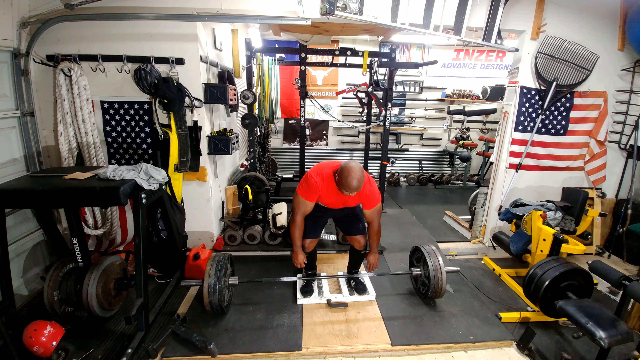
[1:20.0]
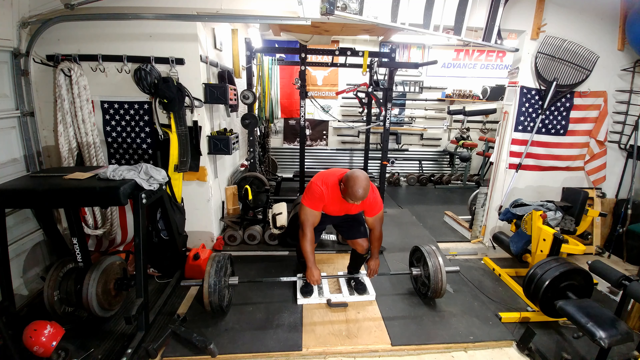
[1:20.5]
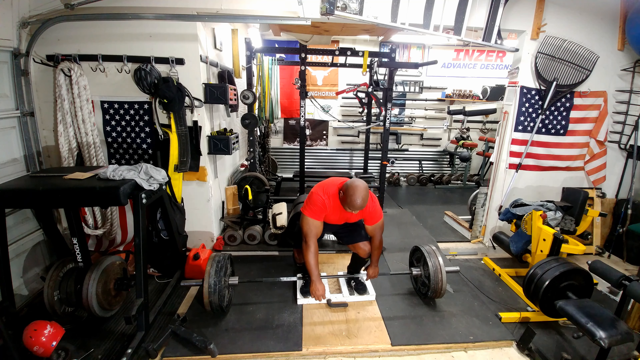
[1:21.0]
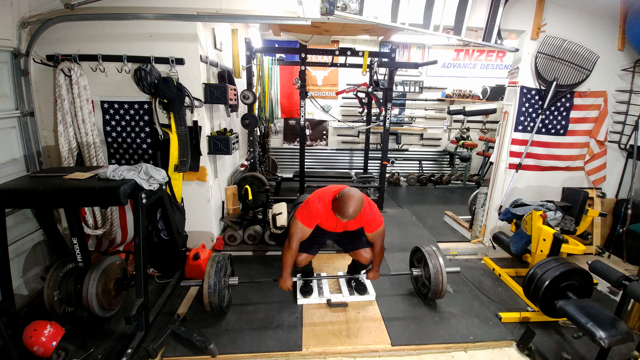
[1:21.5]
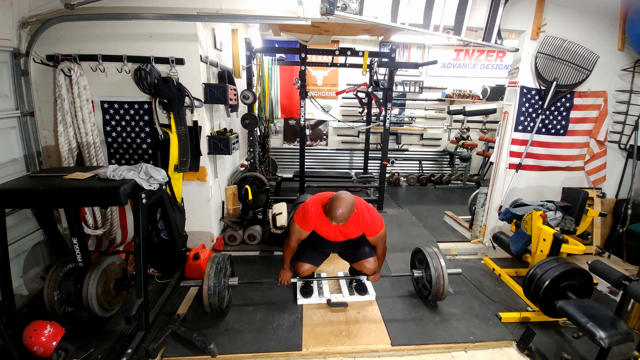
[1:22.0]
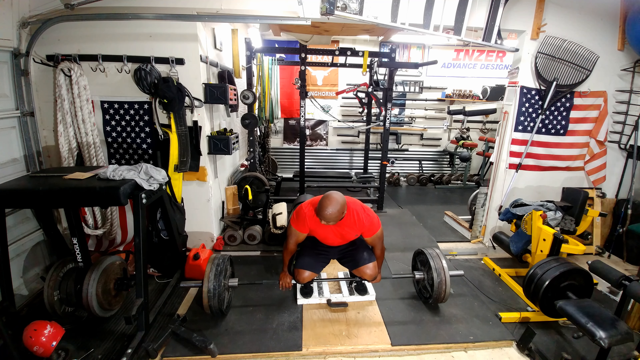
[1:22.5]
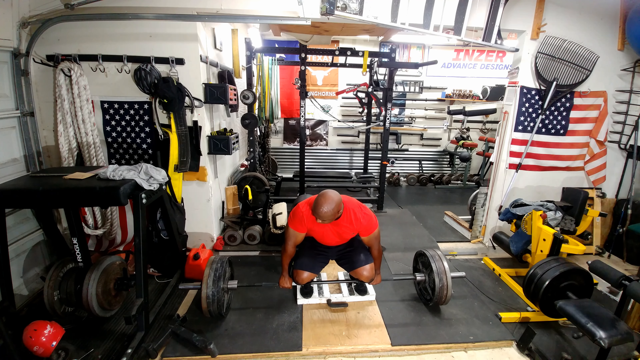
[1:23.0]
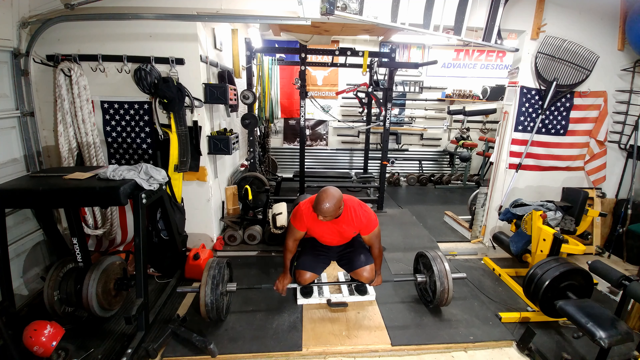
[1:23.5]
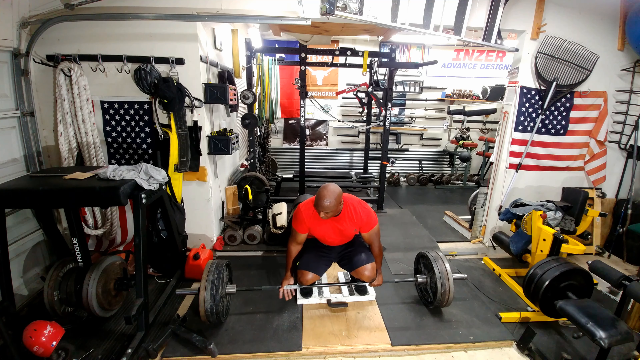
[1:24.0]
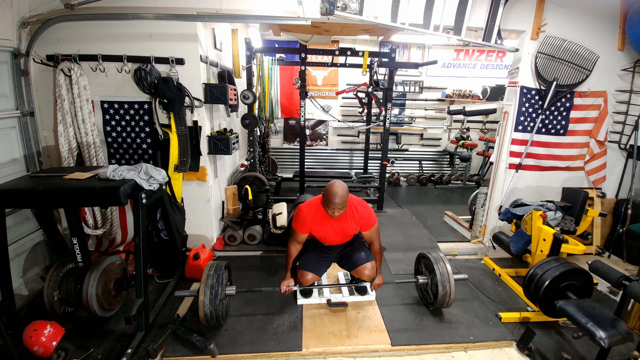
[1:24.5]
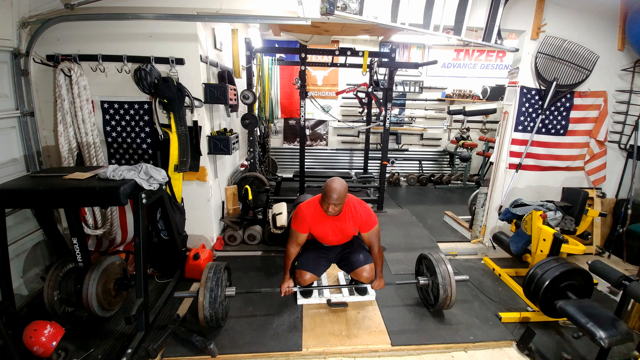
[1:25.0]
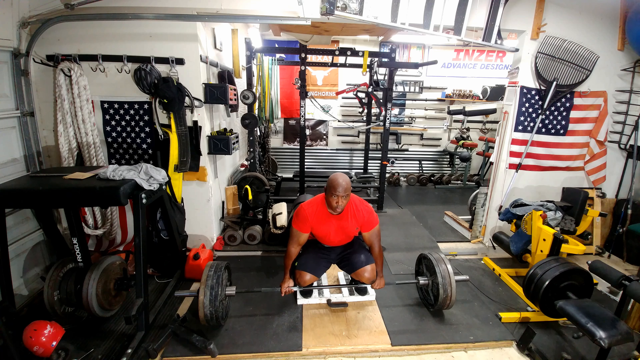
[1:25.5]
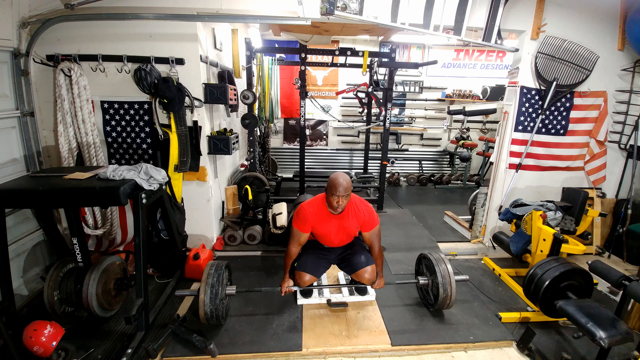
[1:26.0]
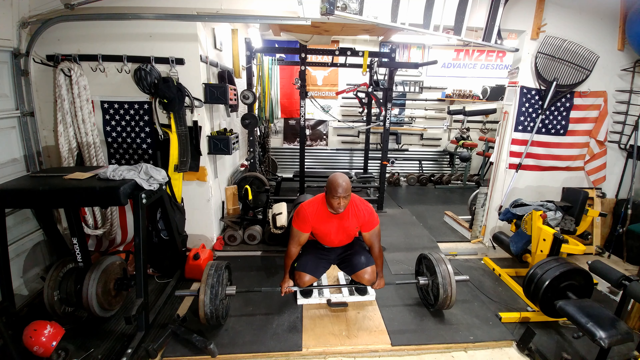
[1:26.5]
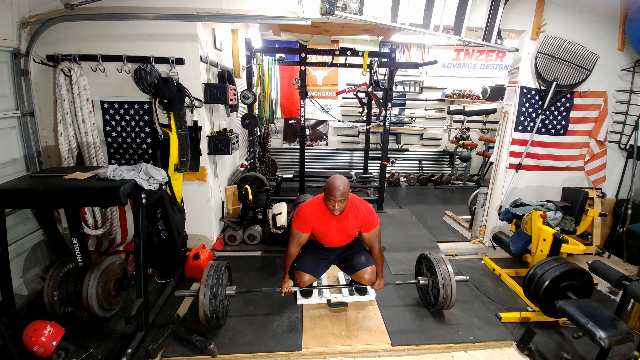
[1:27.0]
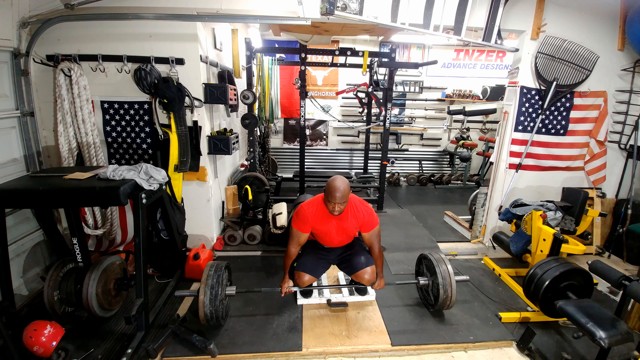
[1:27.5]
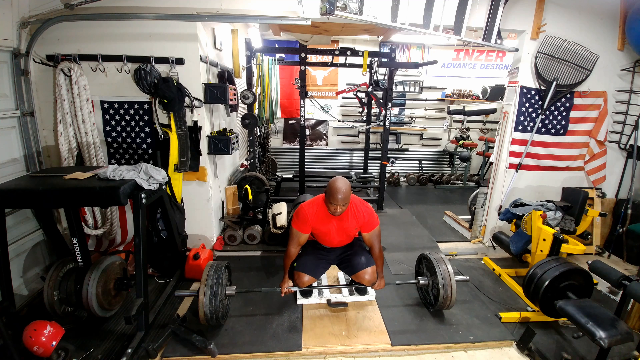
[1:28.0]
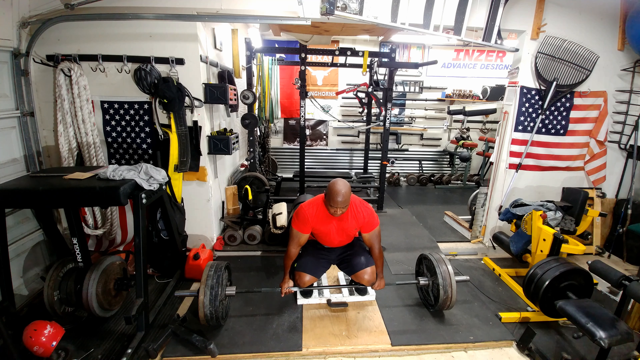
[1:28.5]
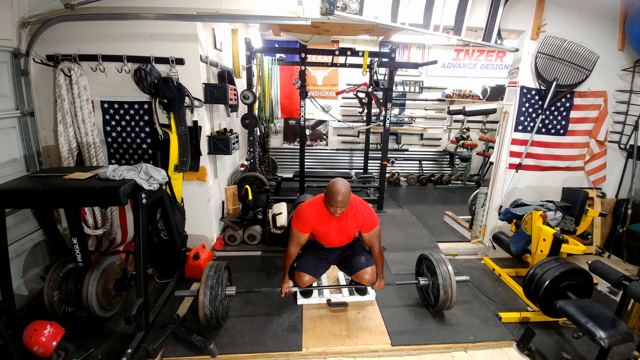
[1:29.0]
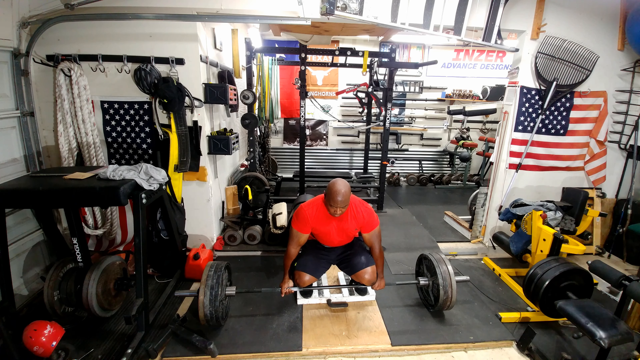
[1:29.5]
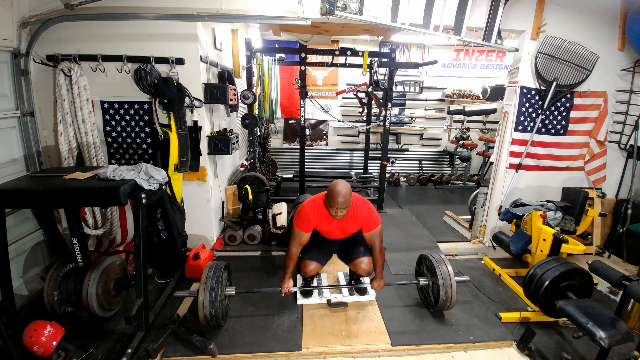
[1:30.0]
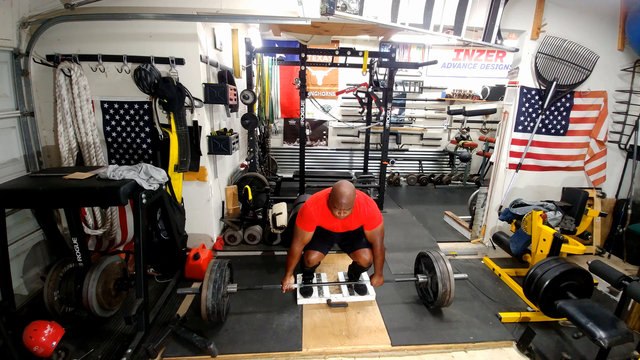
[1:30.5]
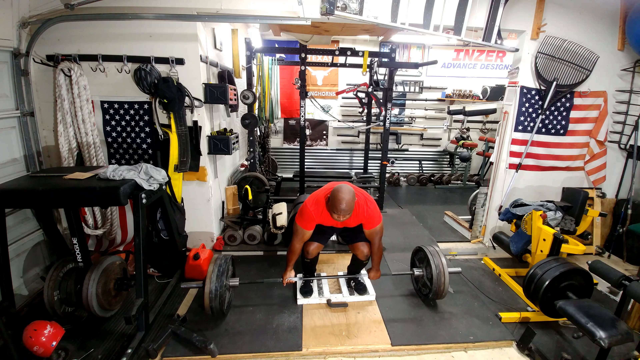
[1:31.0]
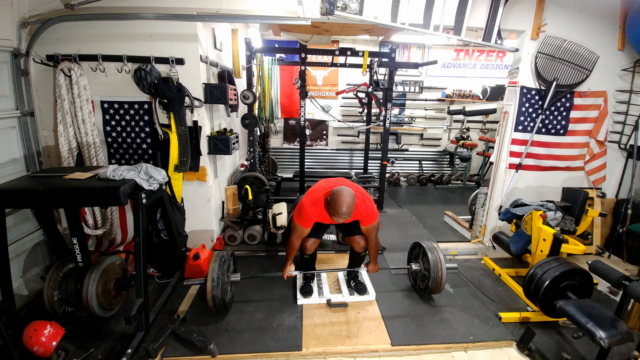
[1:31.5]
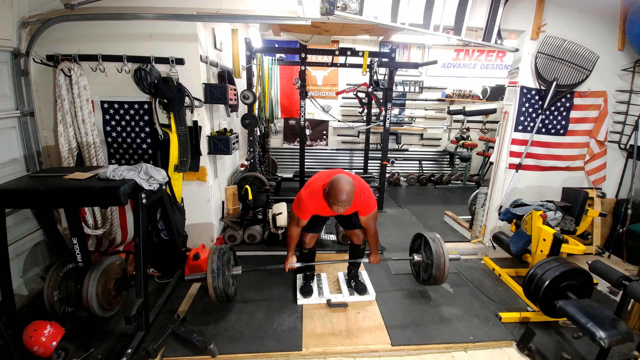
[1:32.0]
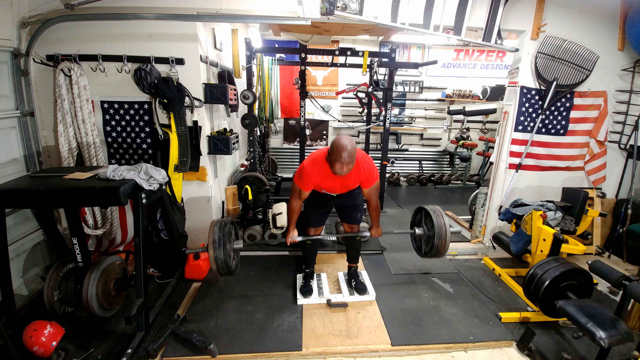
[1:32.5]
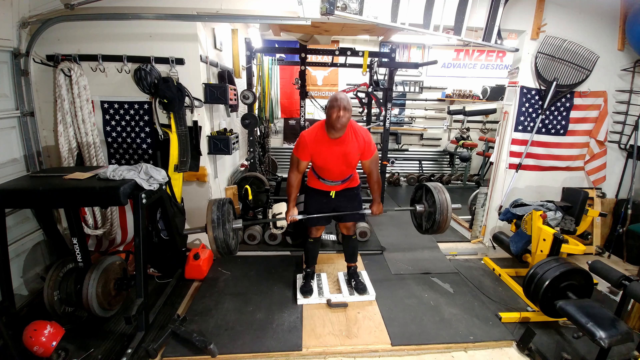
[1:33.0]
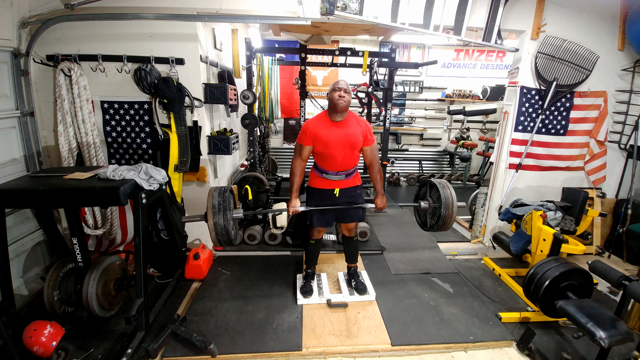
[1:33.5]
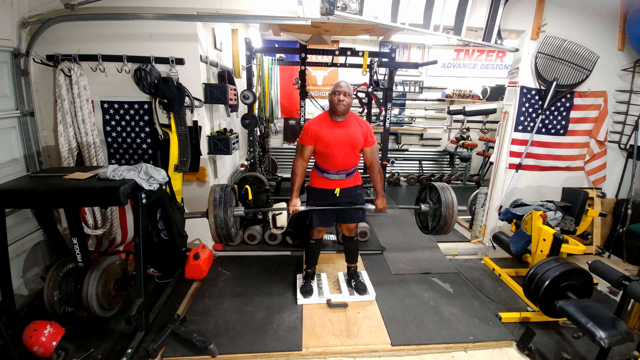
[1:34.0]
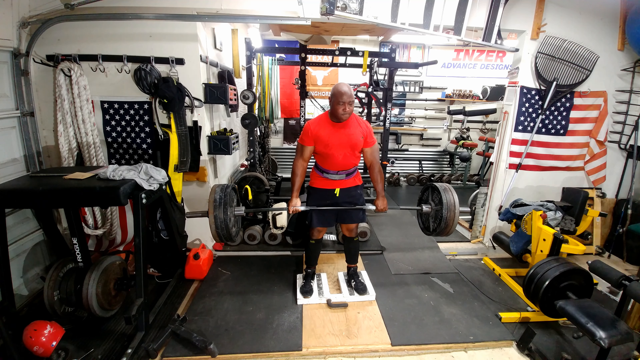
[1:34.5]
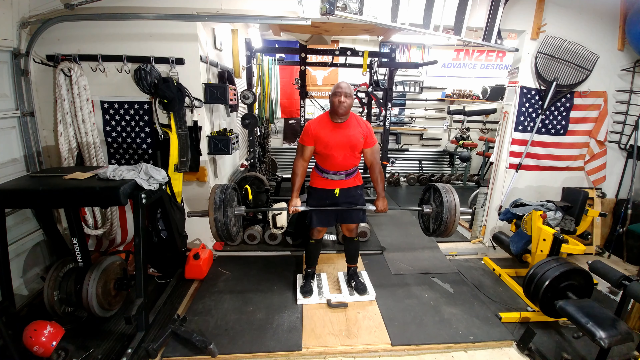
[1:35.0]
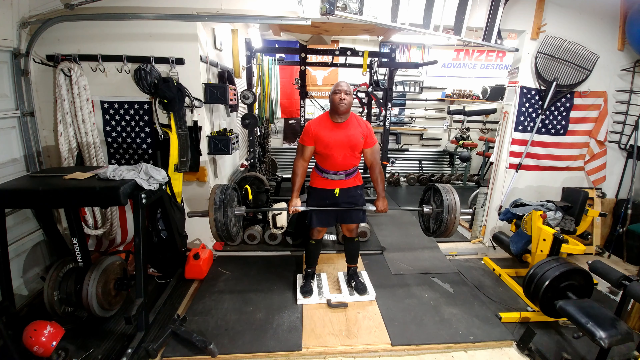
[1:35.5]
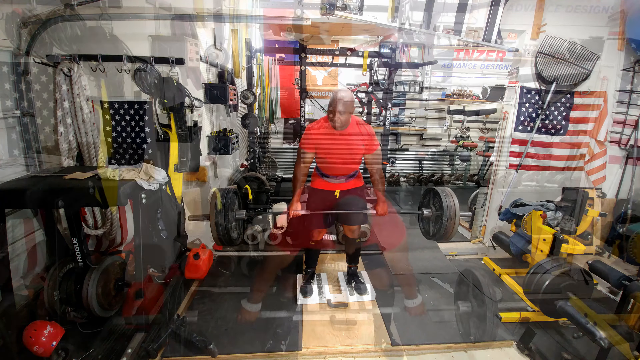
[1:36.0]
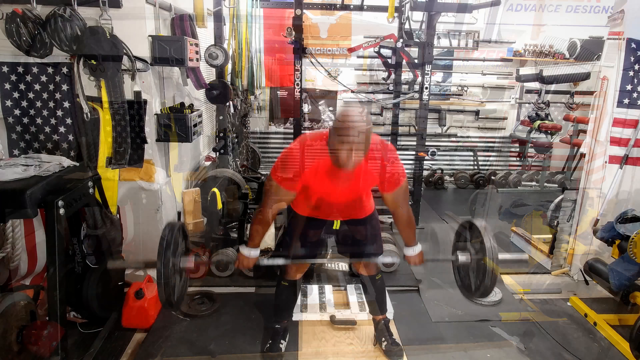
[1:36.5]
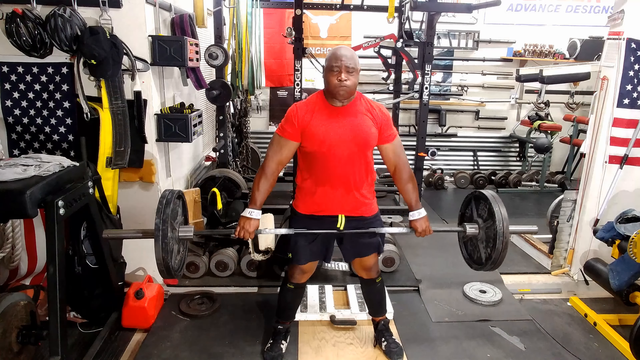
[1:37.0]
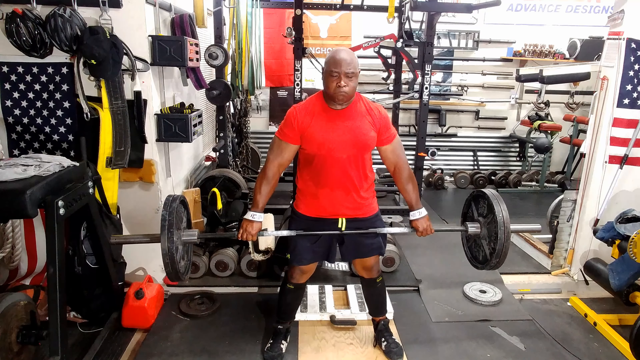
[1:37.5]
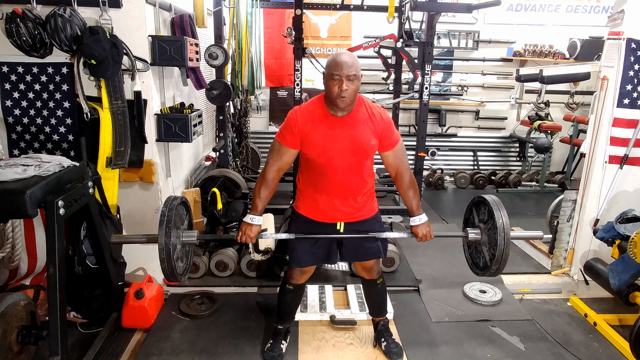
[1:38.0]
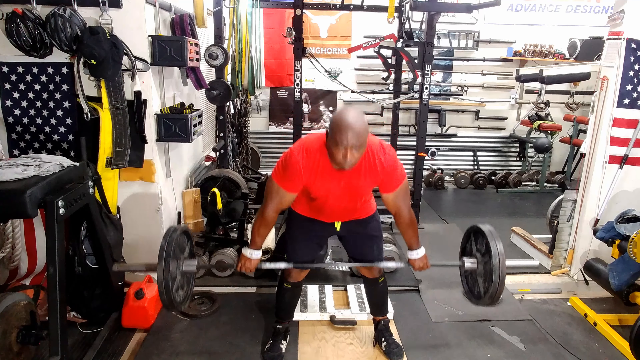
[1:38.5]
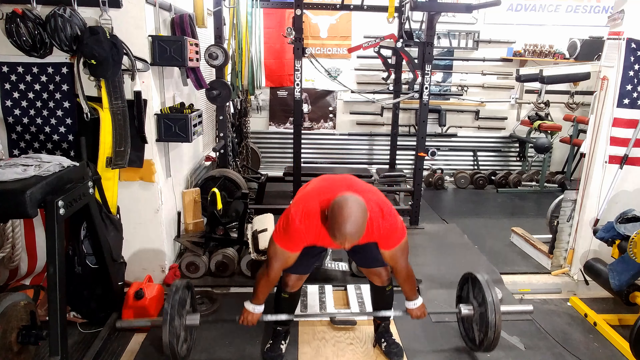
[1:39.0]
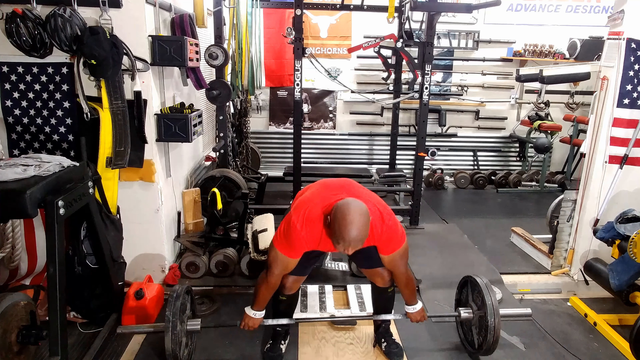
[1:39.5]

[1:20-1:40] The man picks up the bar, this time with both hands facing inward, unlike before. He looks toward his right arm, then turns that hand over so it faces outward and re-grips that side of the bar, and looks forward. He gives his head a little shake as he prepares, then rises, lifting the bar. The bar bends a little with so much weight on each end, and he stands up straight and holds it. The video cuts to him doing it again; he blows out air as he holds the bar, then brings it back down, and continues, the strain and struggle visible on his face. Each time he squats to pick up the bar and stands straight as he lifts, performing deadlifts.